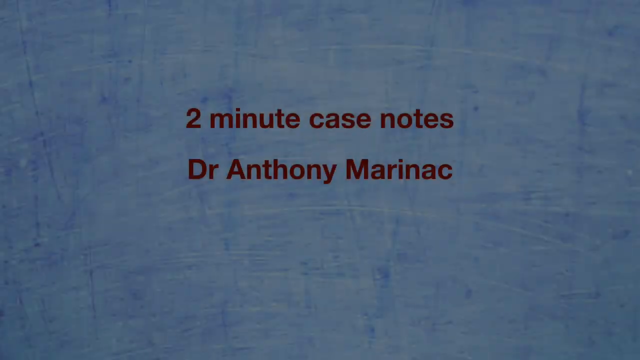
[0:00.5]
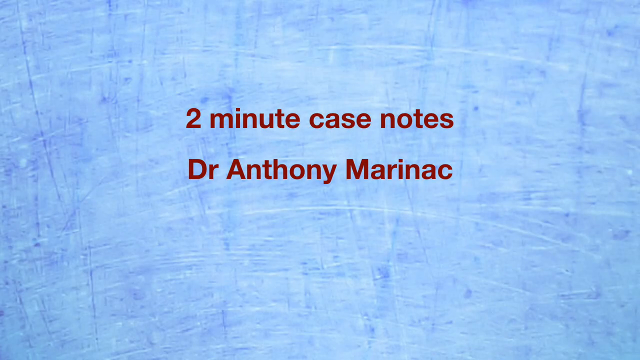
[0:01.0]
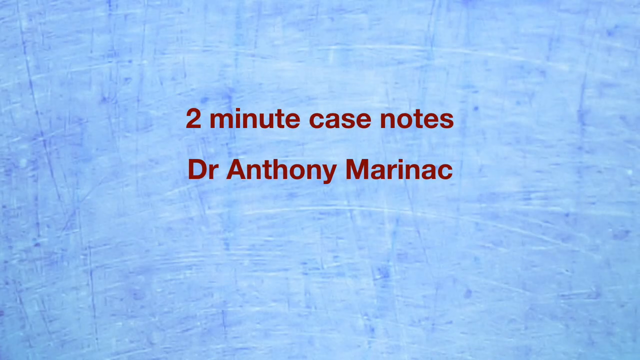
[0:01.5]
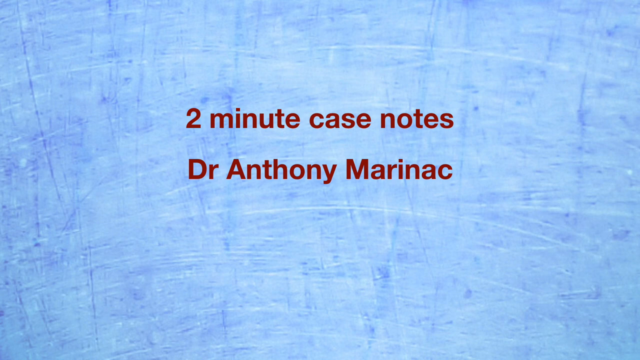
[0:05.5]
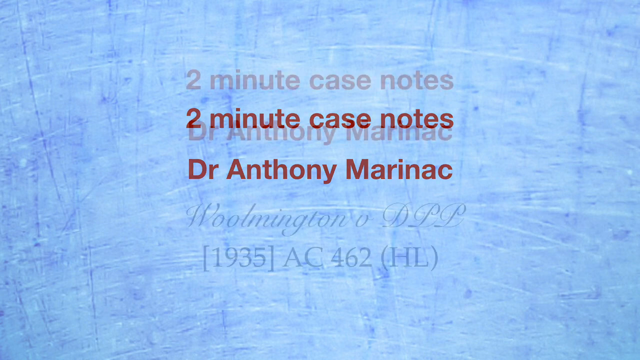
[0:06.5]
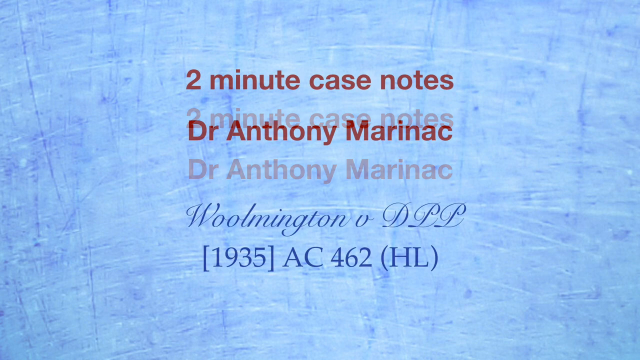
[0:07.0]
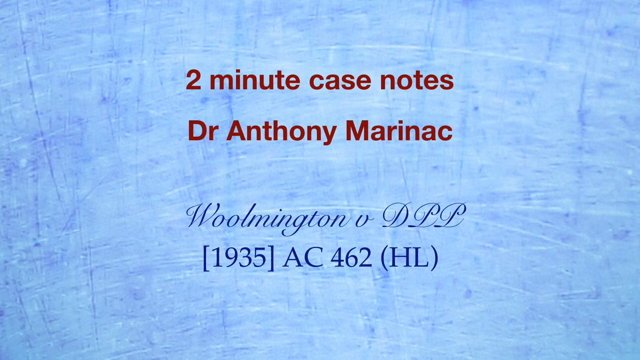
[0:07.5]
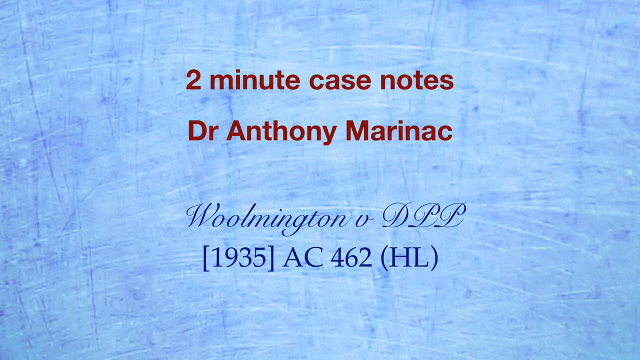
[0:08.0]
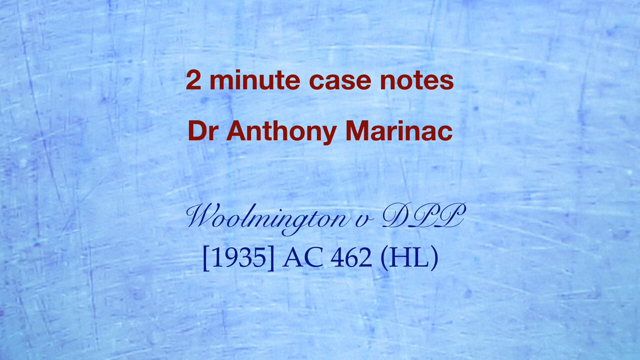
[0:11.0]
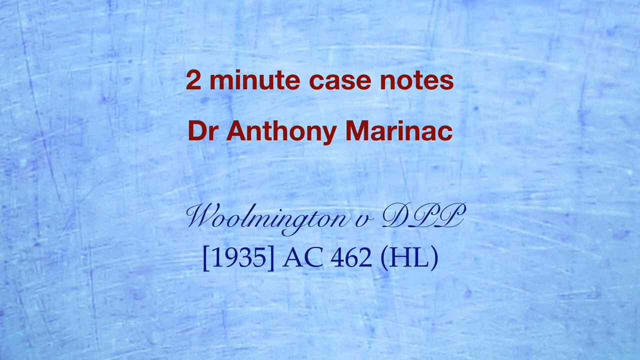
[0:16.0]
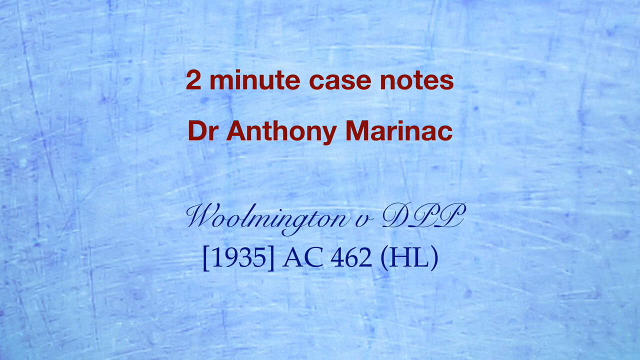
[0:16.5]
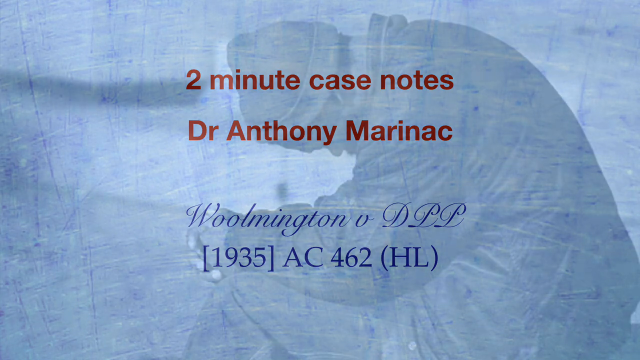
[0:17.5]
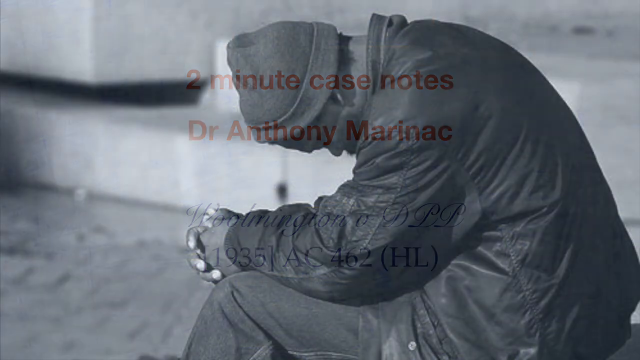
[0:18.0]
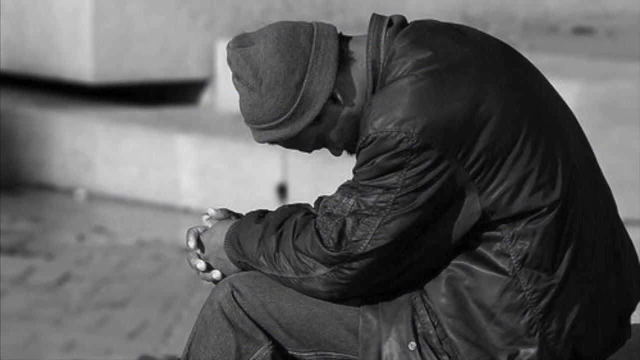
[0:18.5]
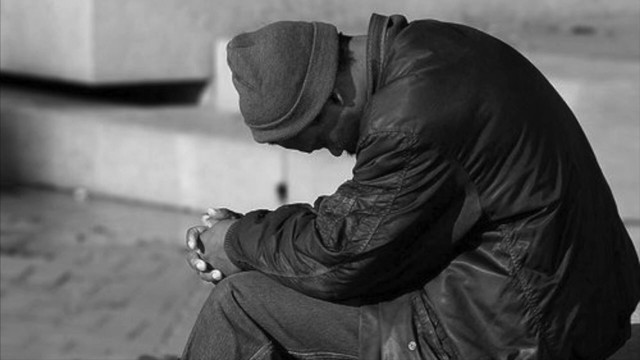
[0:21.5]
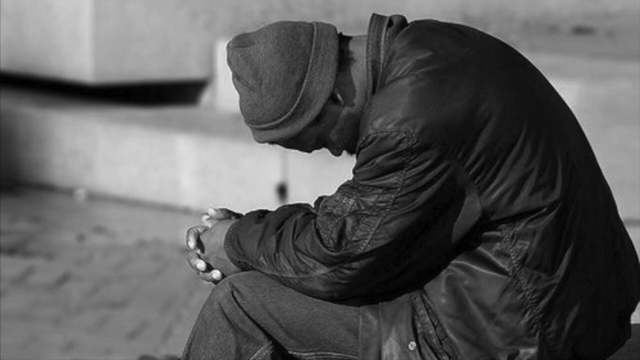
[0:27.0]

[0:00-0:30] The video opens with the text "2-Minute Case Notes, Dr. Anthony Marinac" in red over a black background with blue markings behind it. The markings appear to look like scratches and extend up and down in long lines. More text appears below; the text at the top slides up a bit to make room for it. The lower text appears to be in a handwritten font, and below it is what appears to be a date. A fade leads to a black-and-white still image of a man who appears to be kneeling and praying. He cups his hands in front of him with his head bowed, and wears a jacket, a beanie cap and dark pants. The camera lingers on the image for about 10 seconds without moving or animating further, until a fade to black.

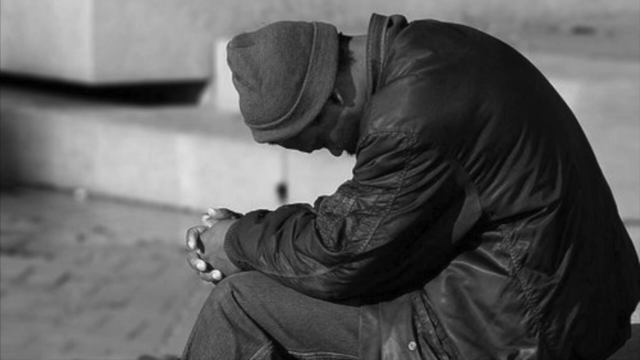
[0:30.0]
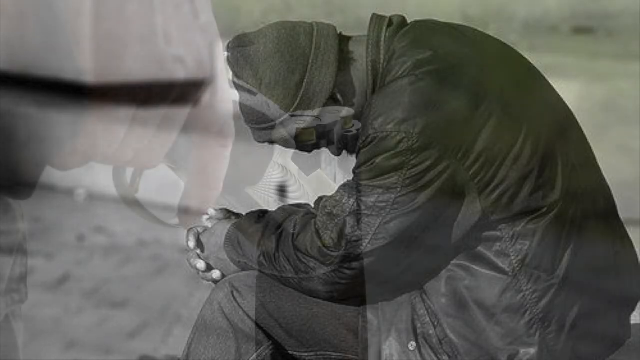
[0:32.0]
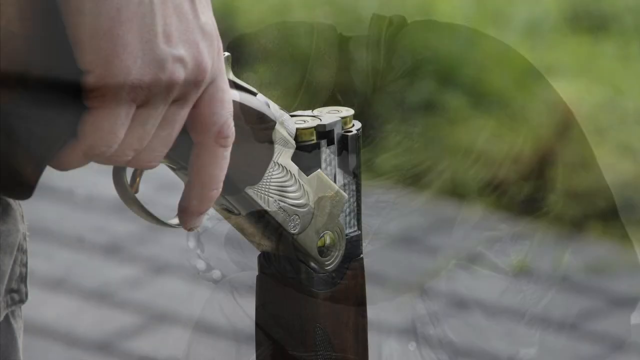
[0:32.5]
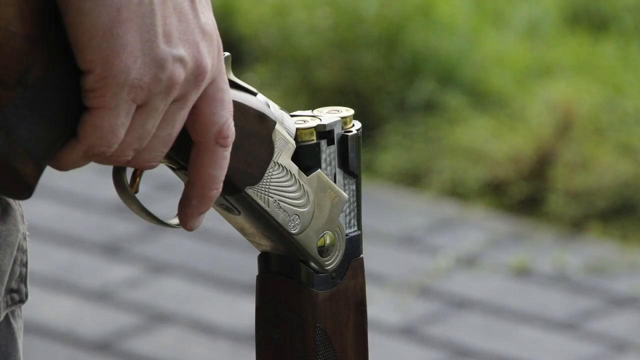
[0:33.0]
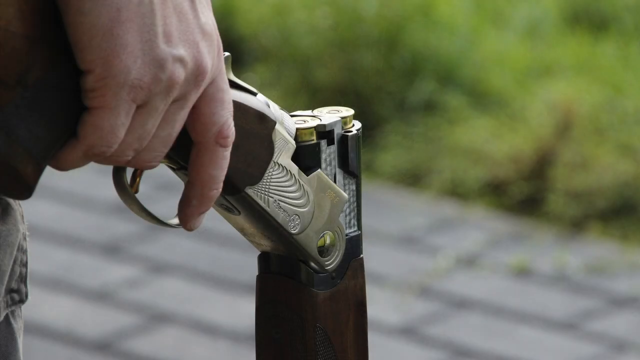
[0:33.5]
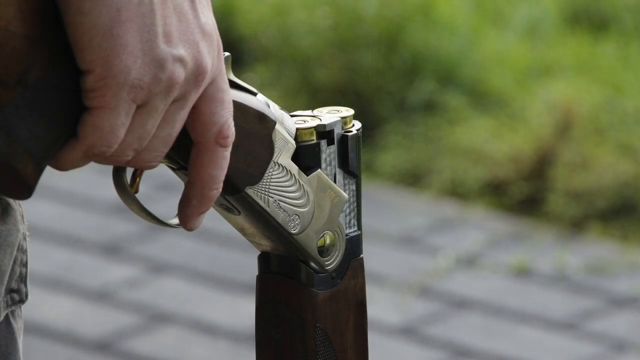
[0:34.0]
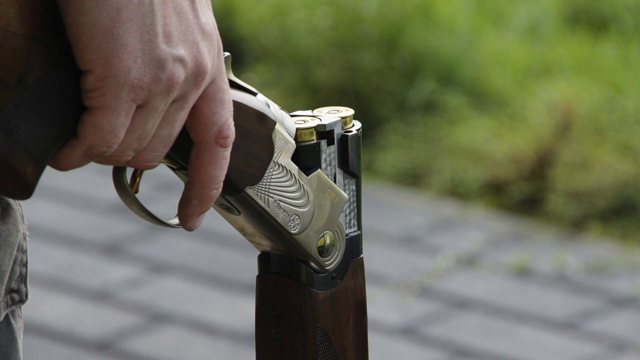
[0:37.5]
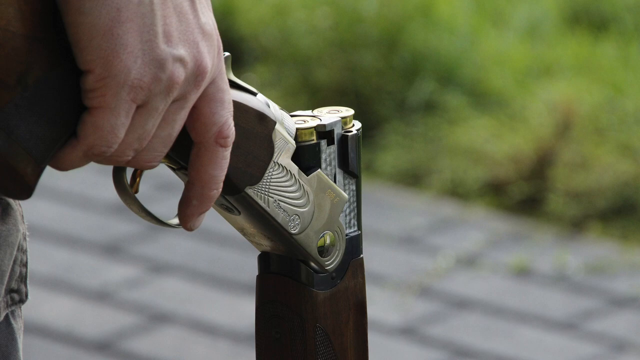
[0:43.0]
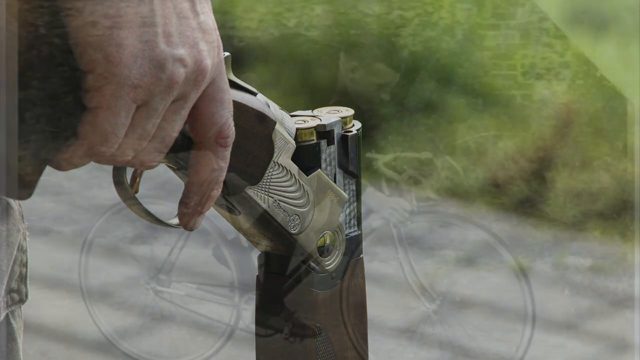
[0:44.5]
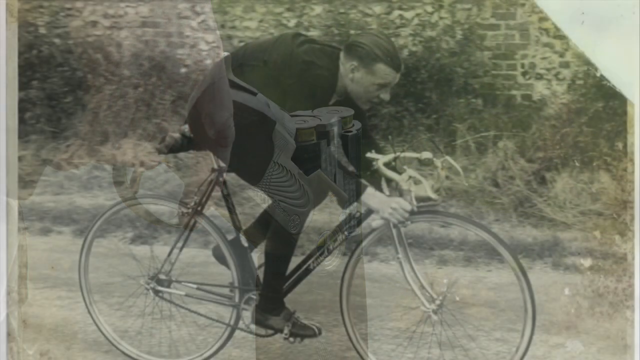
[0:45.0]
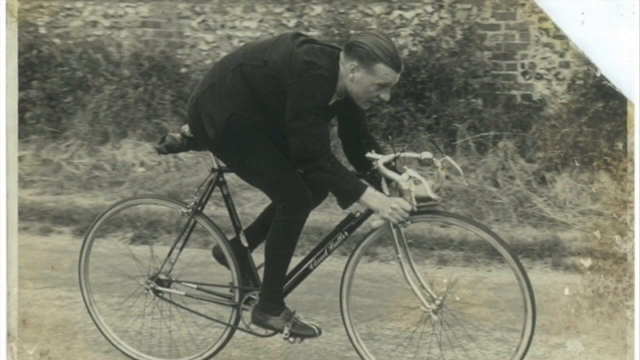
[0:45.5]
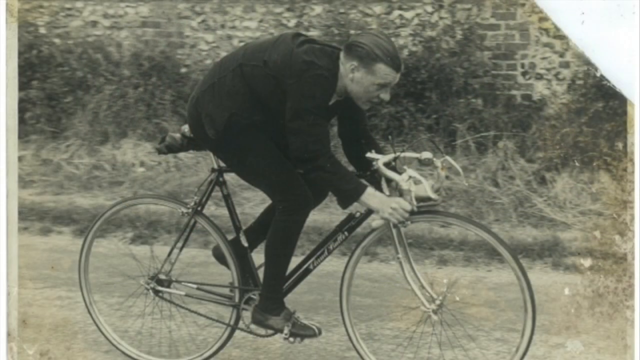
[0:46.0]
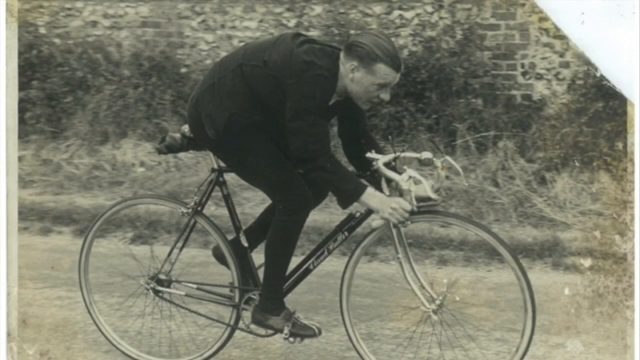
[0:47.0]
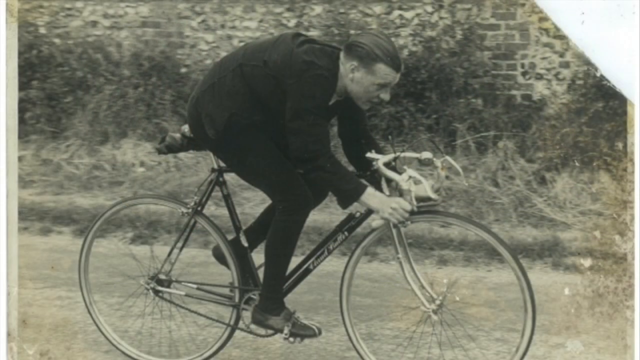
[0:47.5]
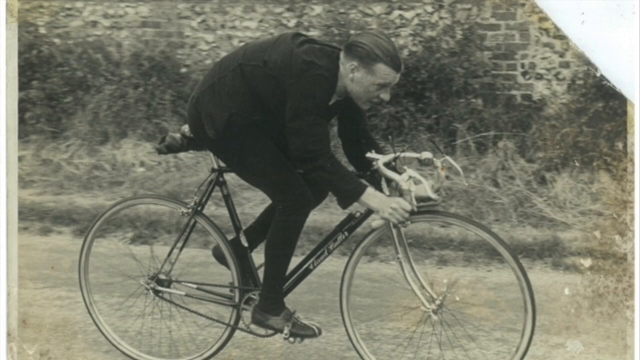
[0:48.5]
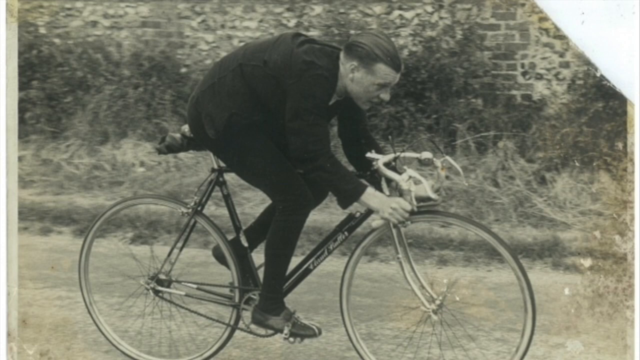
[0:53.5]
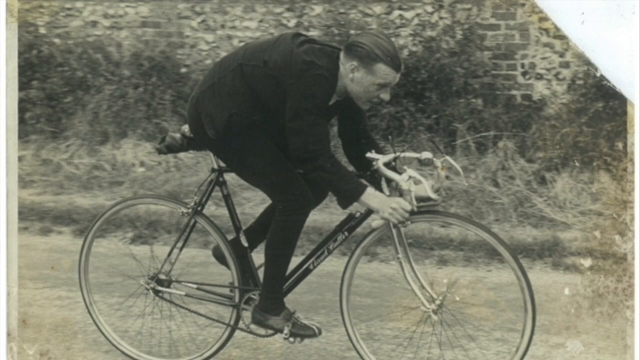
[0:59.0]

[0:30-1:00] A close-up shows a hand holding what appears to be a gun, some sort of shotgun with a breech that is lowered open. The hand holds the gun by the stock, with the finger placed outside the trigger guard. It is a still image, and the camera lingers on it. In the out-of-focus background there appears to be concrete ground with some foliage beyond it. No other part of the man is visible, only his hand and the gun. A fade leads to a different image of a man riding a bicycle, hunched over low; the bicycle has swept-forward handlebars. The image appears to be very old and sepia-toned, and its top right appears to be cut out. The camera lingers on this still shot for a while before a fade.